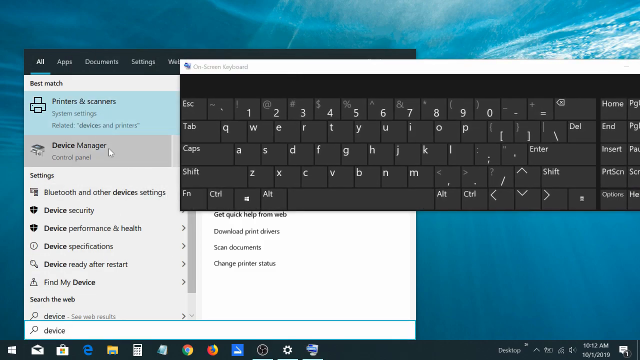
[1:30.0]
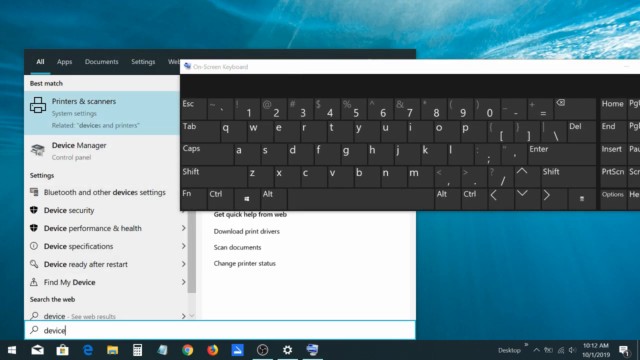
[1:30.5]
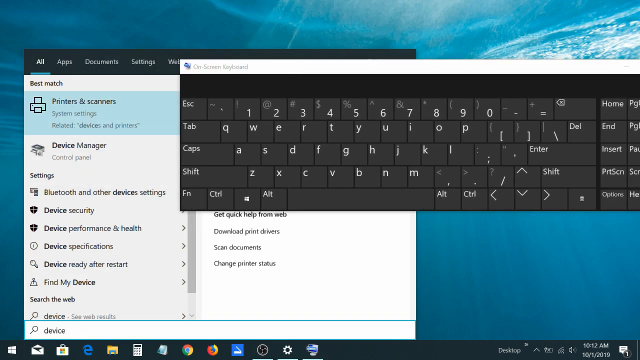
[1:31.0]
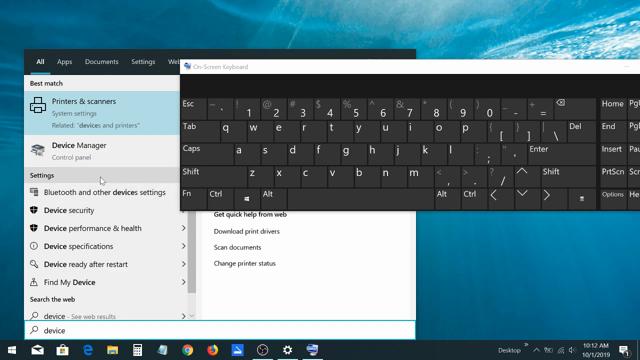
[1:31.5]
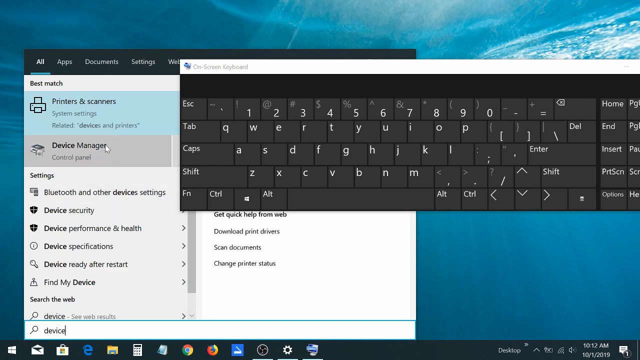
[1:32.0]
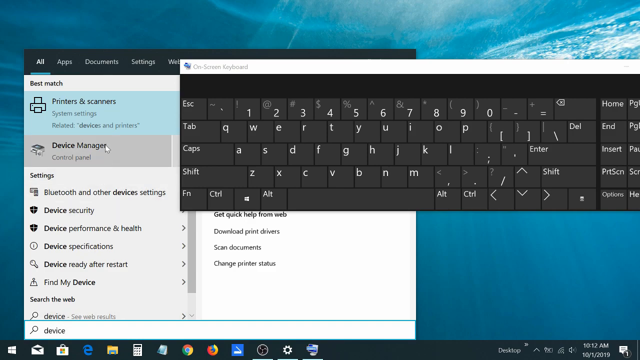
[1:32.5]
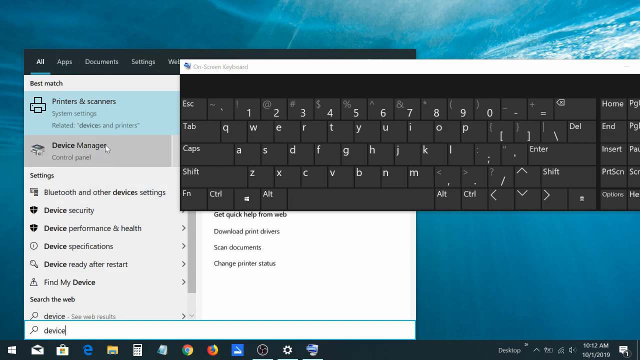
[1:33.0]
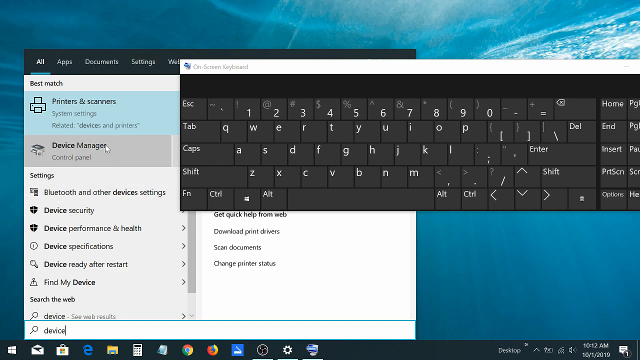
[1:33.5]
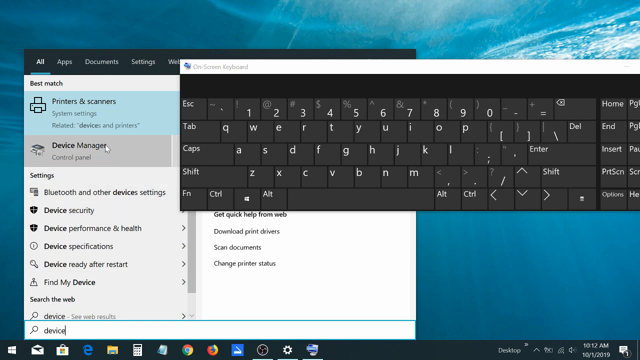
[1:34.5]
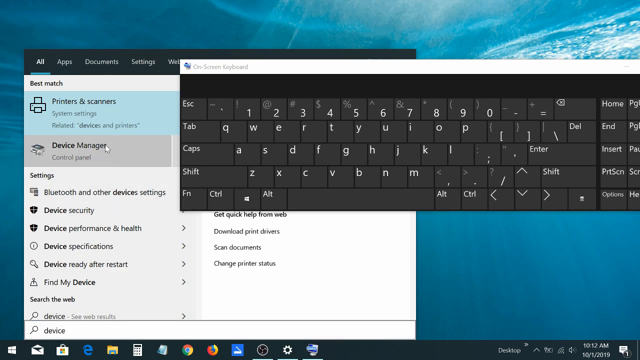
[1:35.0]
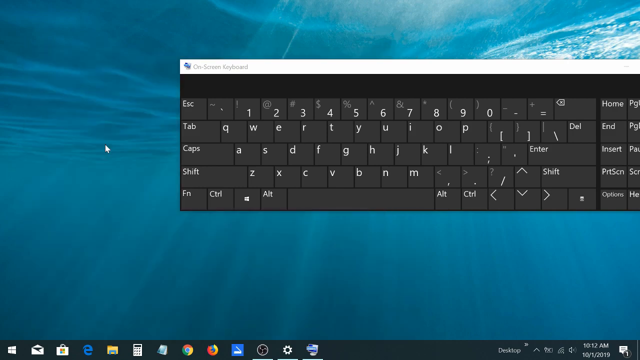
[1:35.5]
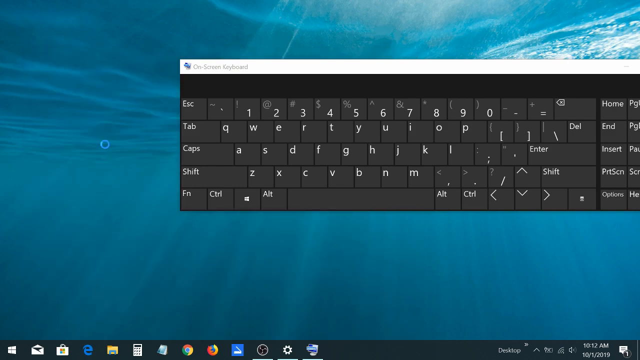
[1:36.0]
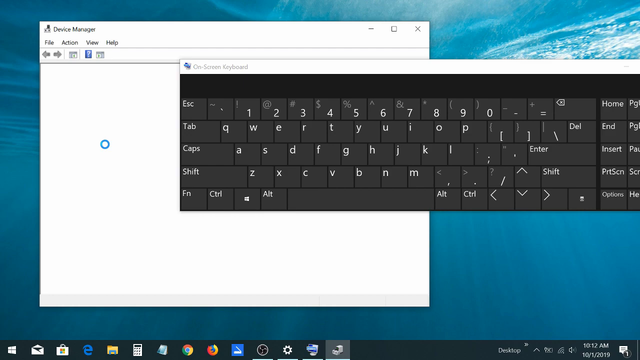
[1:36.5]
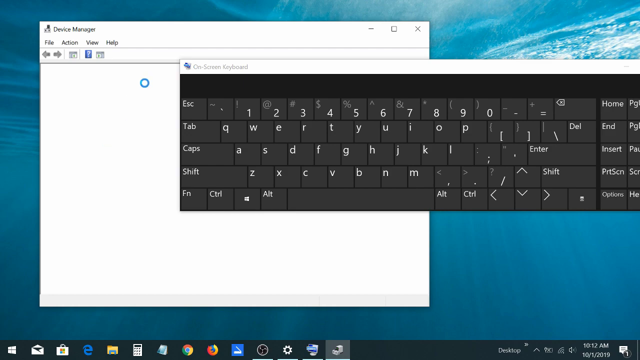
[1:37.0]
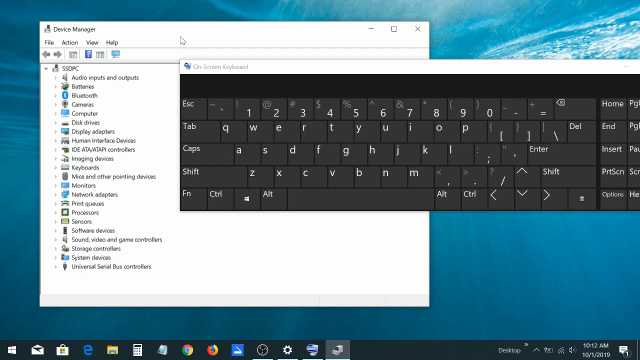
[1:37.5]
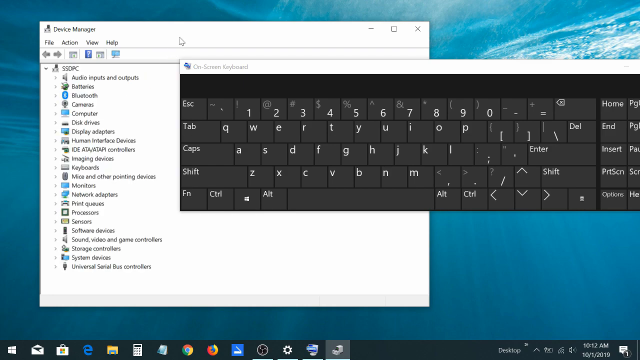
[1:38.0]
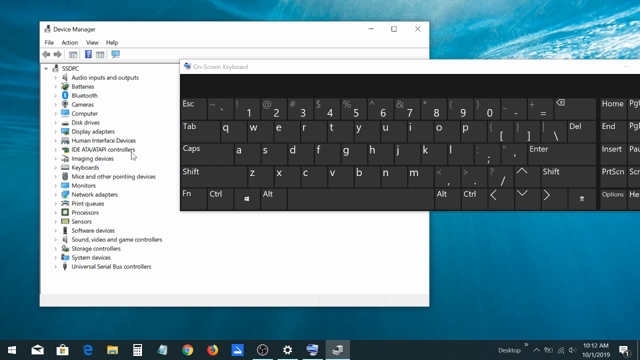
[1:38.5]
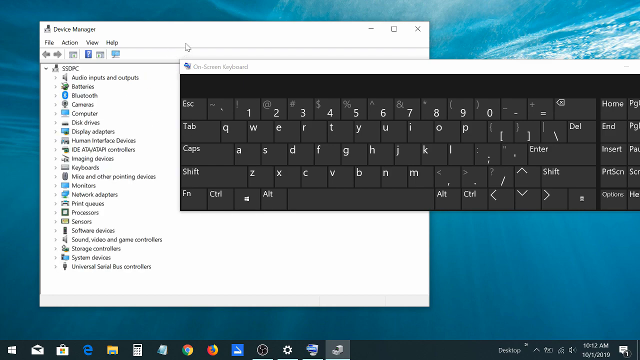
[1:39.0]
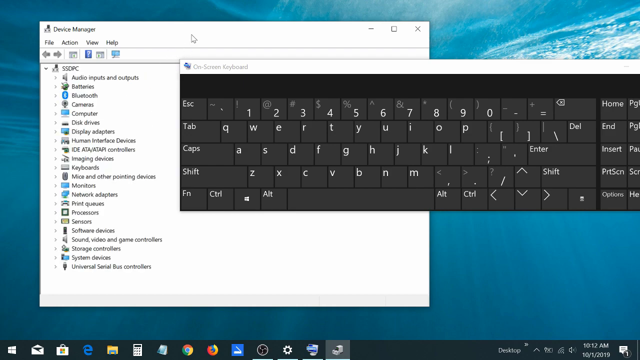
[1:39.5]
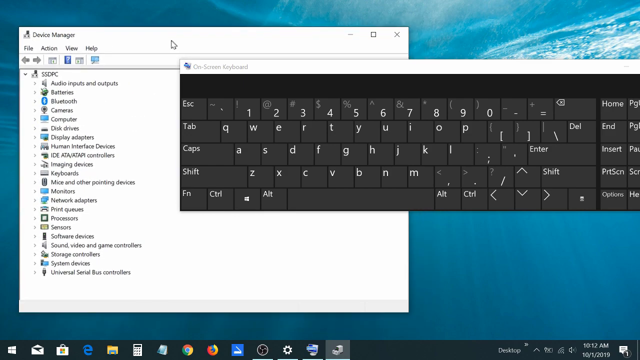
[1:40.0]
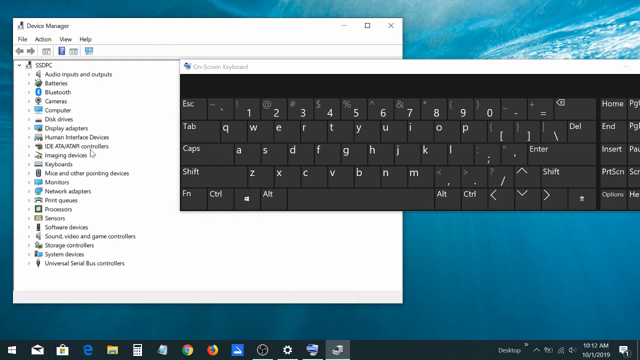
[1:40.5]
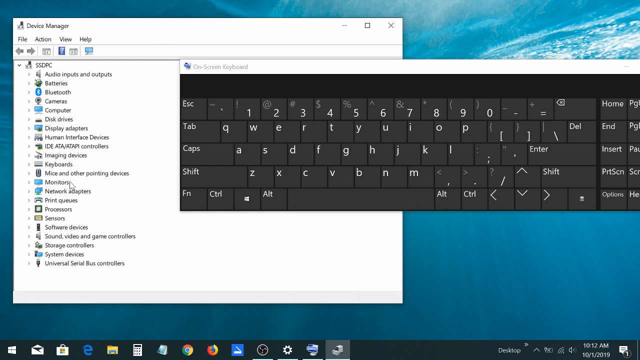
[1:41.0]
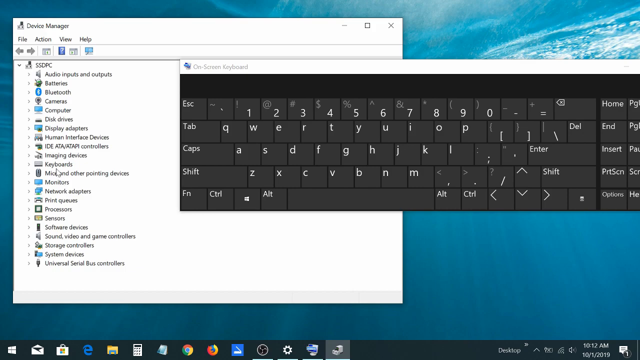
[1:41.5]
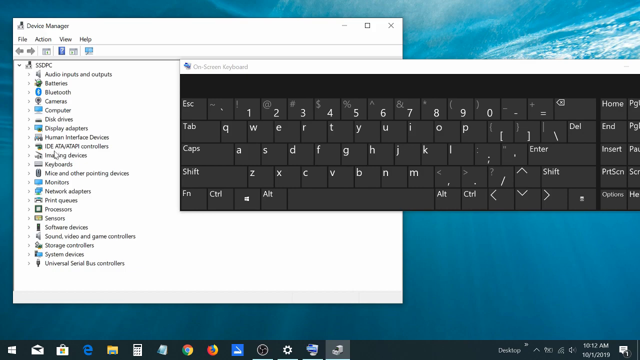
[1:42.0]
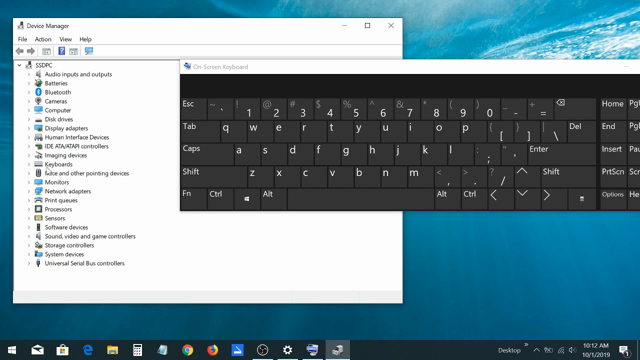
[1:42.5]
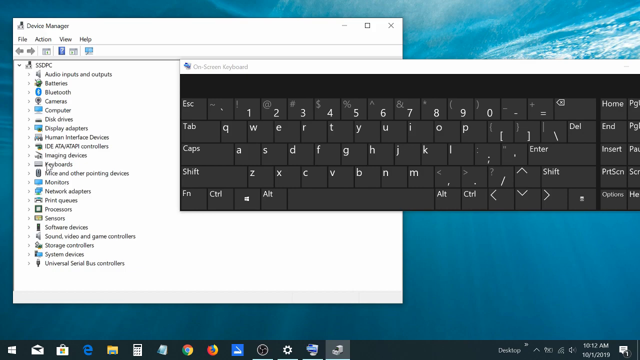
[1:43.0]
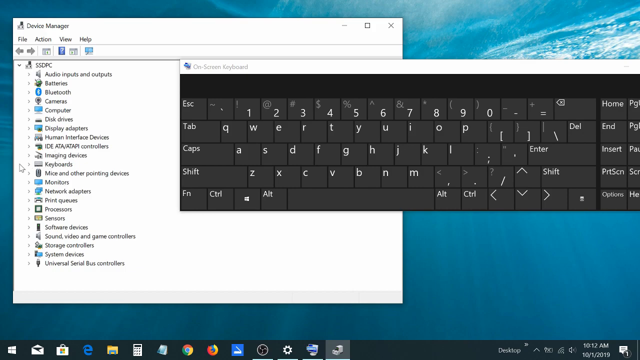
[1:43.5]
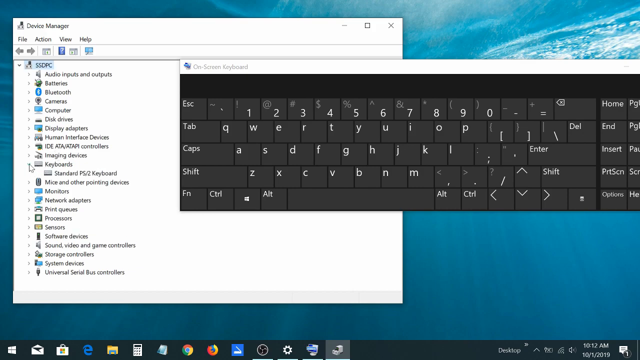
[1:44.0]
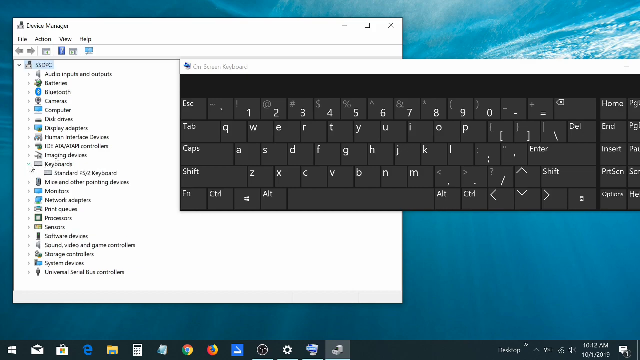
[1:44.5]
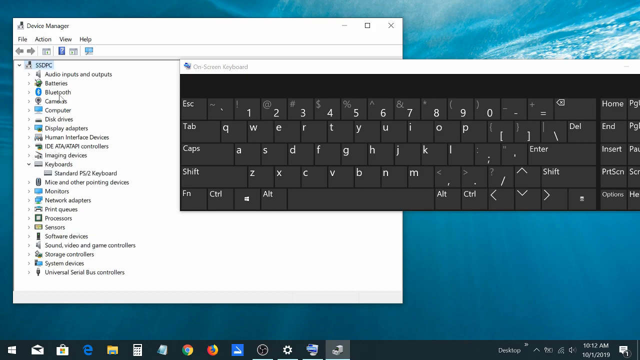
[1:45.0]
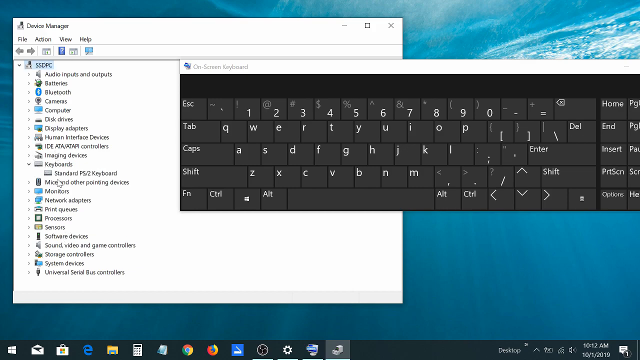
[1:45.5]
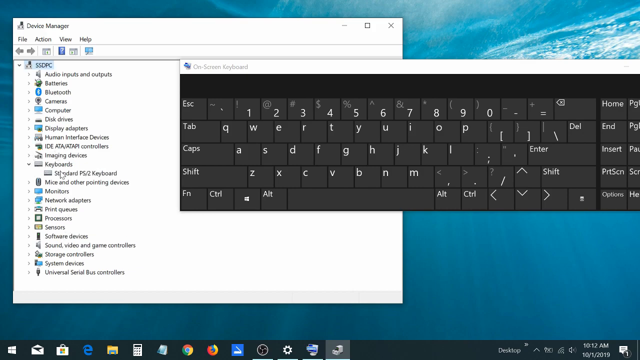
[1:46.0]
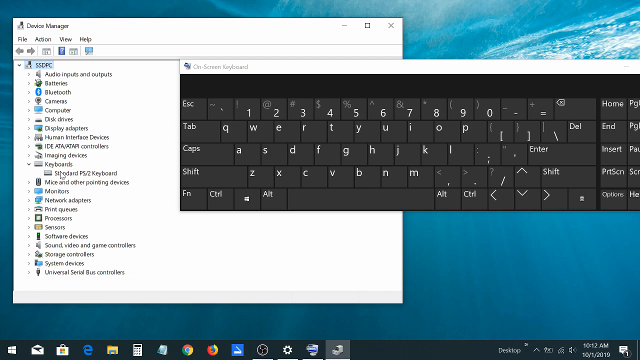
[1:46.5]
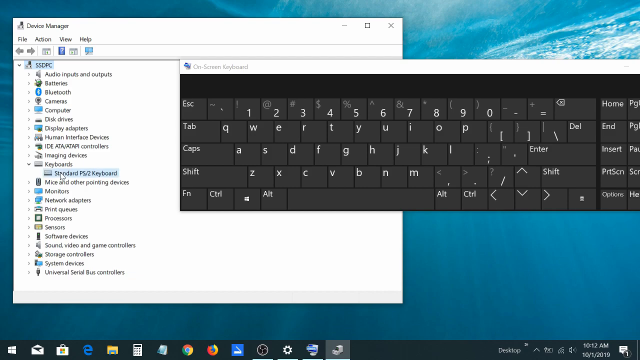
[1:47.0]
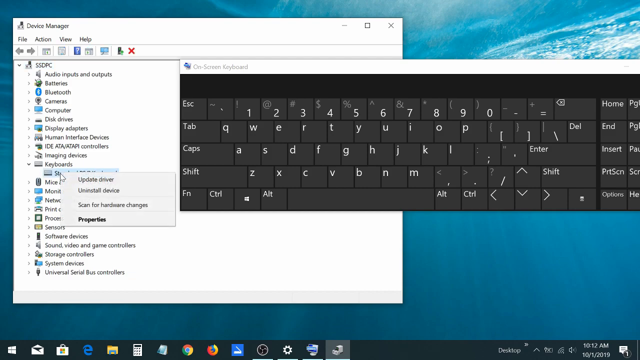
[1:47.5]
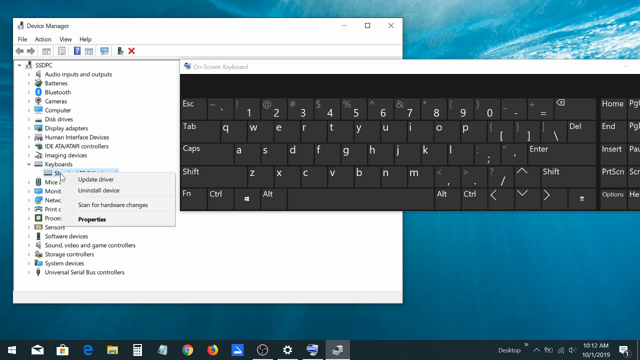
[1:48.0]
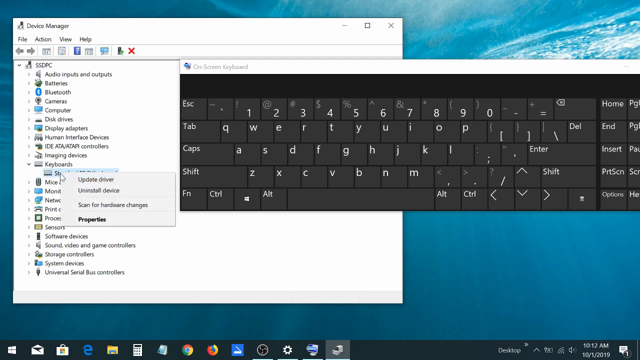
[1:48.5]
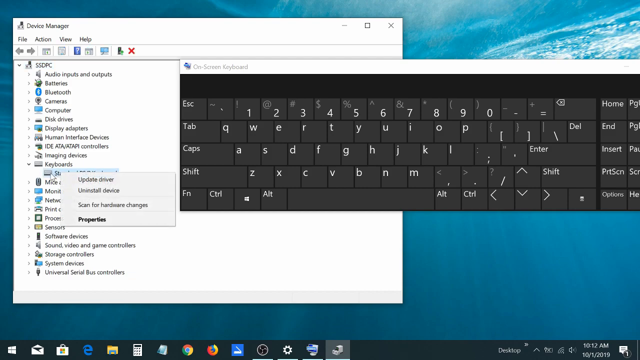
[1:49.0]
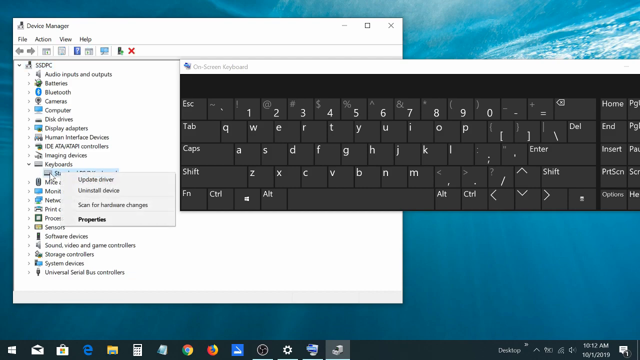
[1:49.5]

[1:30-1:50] The wallpaper is still the blue ocean with the scuba diver, but it cannot be seen because the black on-screen keyboard and the Windows taskbar are up. The person opens Device Manager, apparently having pulled the keyboard up just to type that. They move the mouse up and down and move the Device Manager box around a little, while the keyboard still blocks the view. They pull up the keyboard entry, highlight it and go to properties.